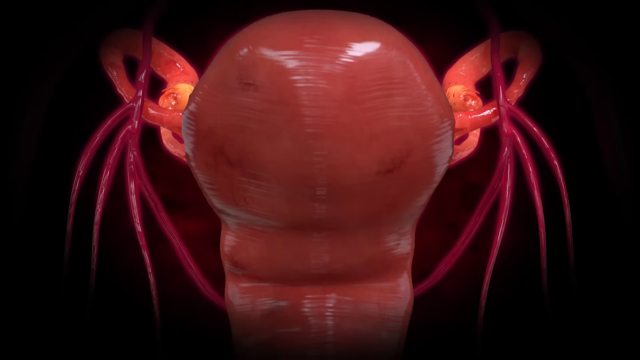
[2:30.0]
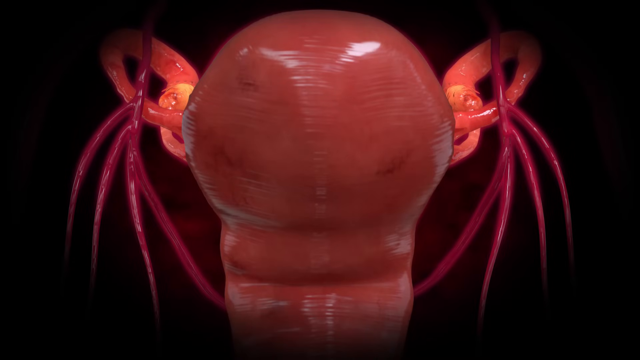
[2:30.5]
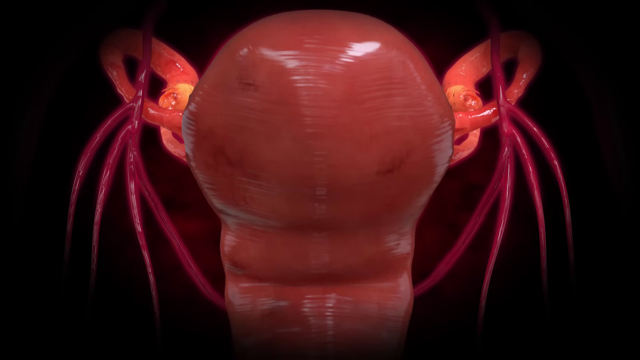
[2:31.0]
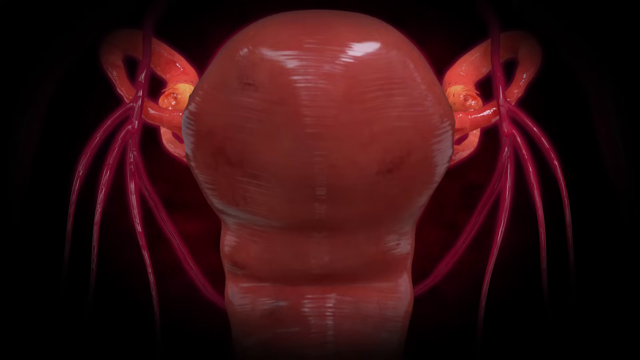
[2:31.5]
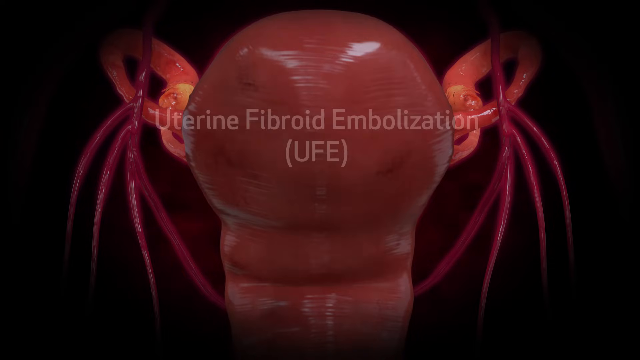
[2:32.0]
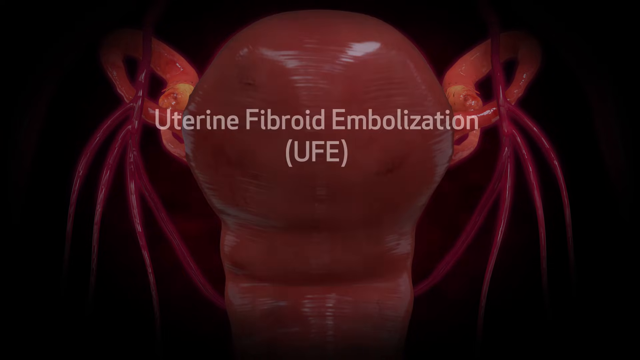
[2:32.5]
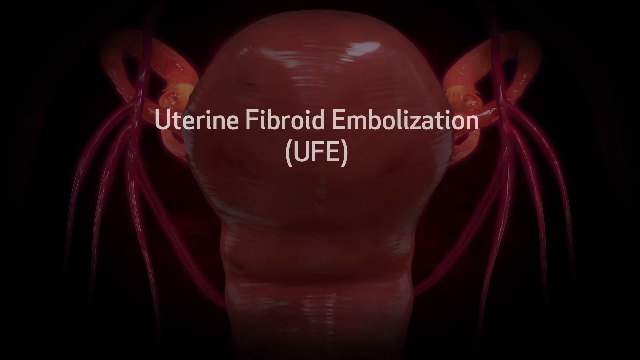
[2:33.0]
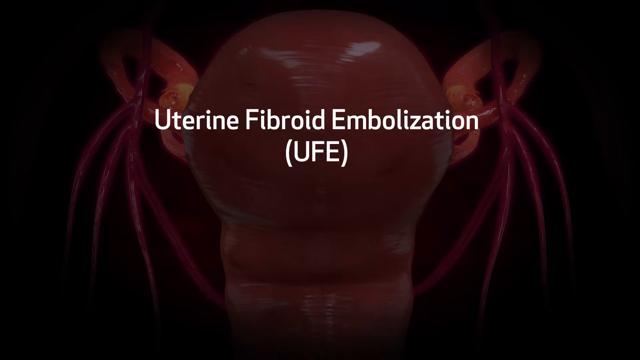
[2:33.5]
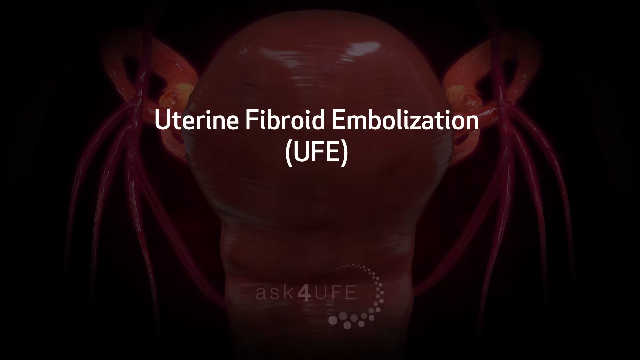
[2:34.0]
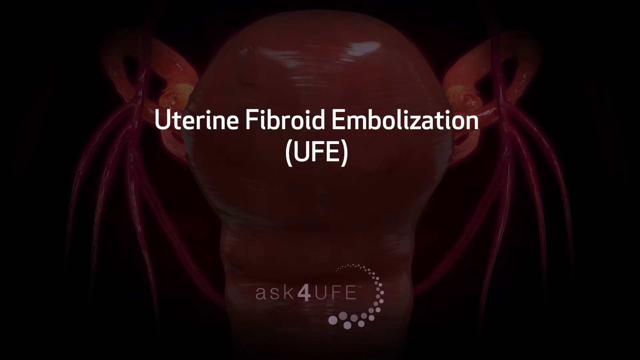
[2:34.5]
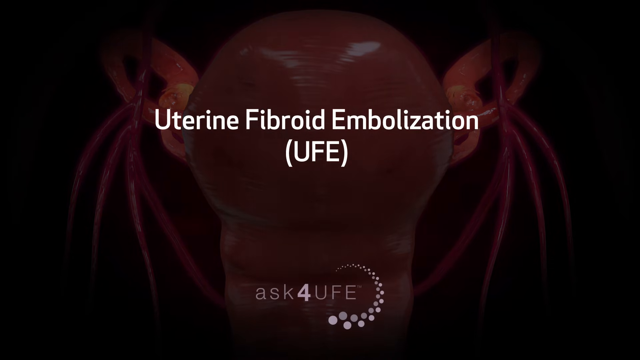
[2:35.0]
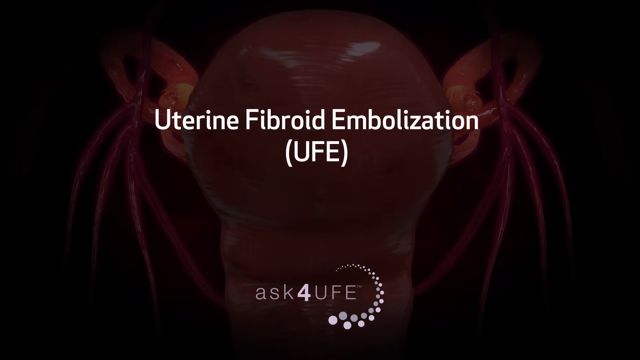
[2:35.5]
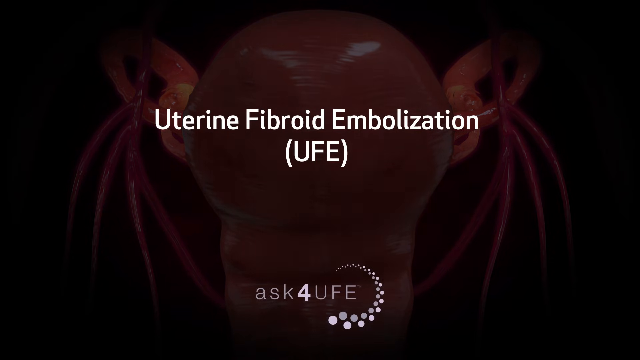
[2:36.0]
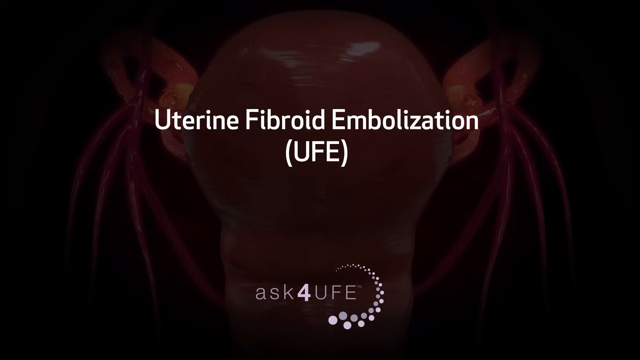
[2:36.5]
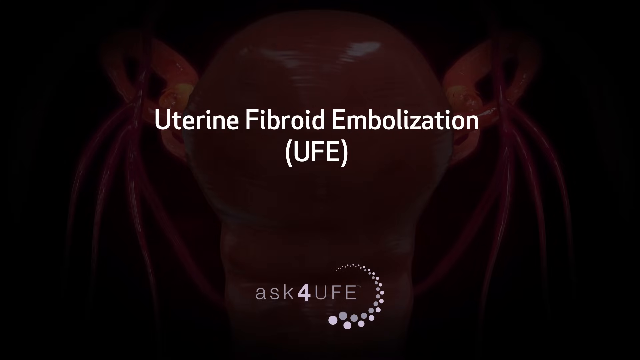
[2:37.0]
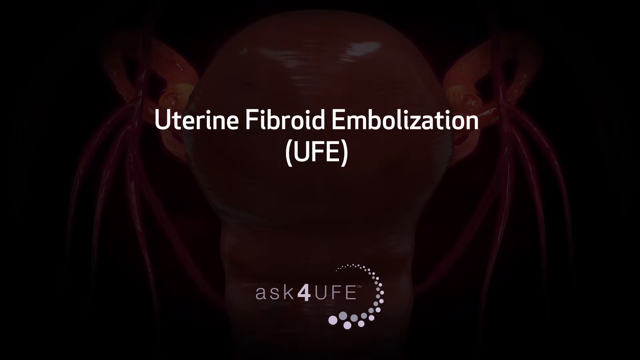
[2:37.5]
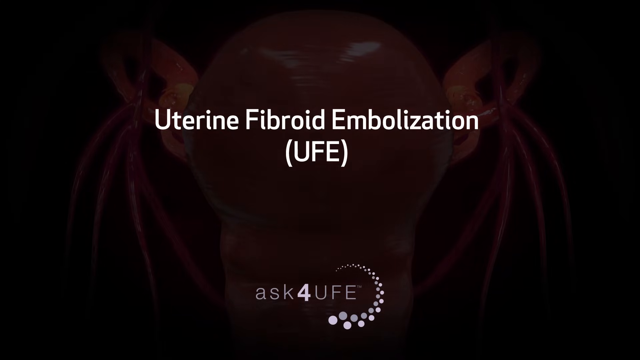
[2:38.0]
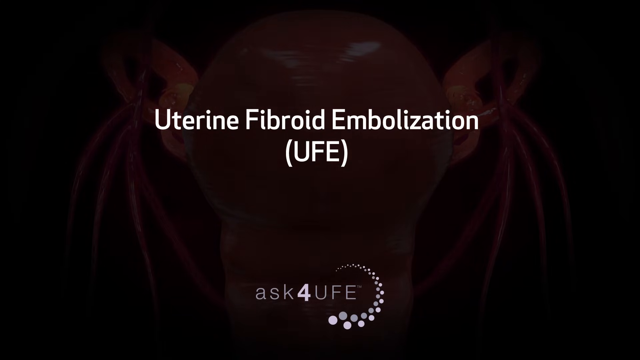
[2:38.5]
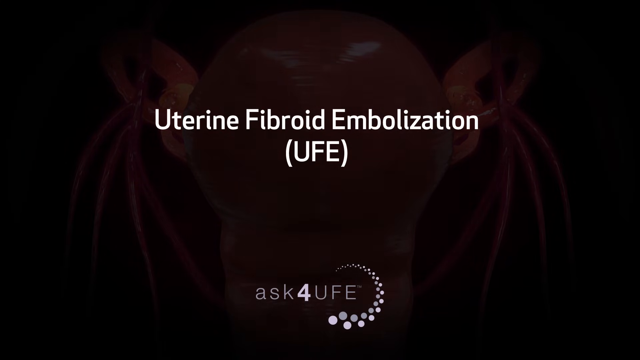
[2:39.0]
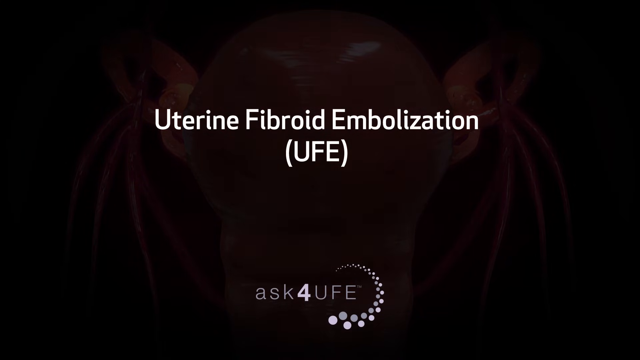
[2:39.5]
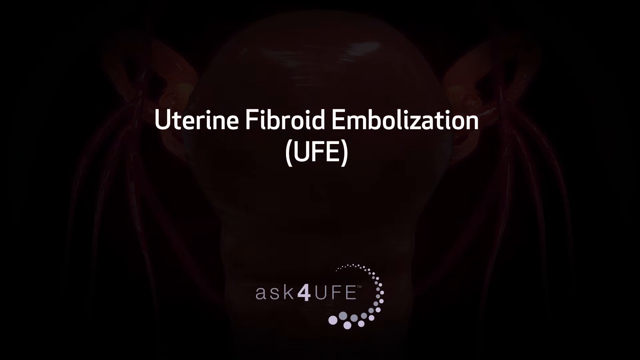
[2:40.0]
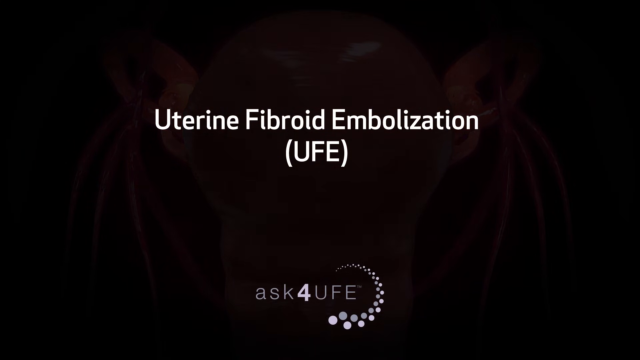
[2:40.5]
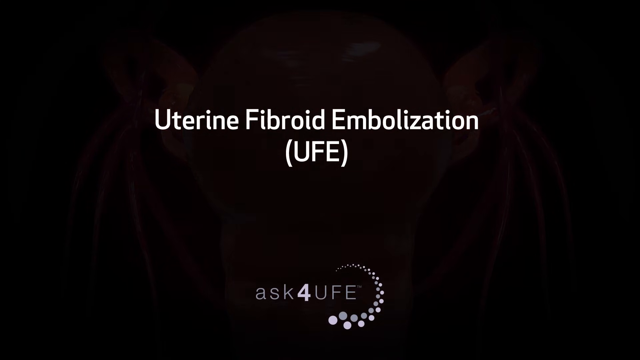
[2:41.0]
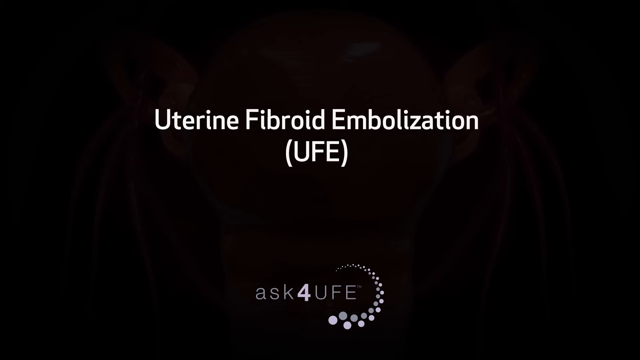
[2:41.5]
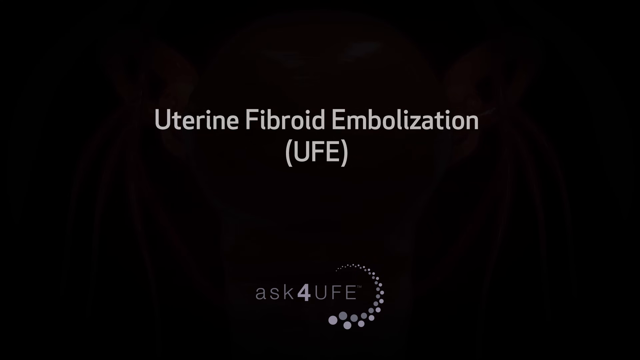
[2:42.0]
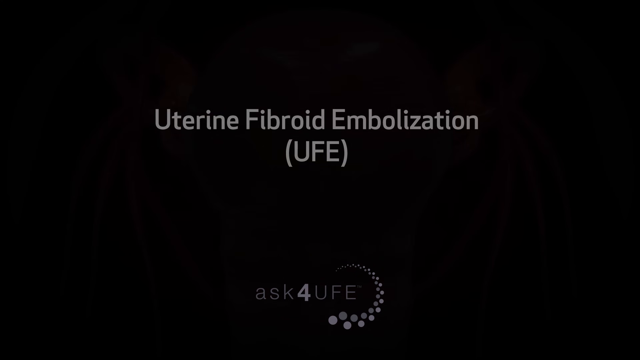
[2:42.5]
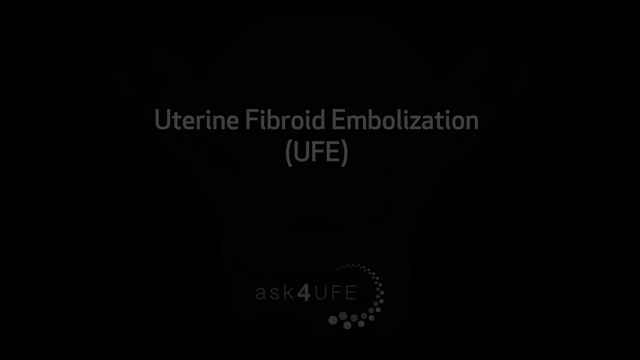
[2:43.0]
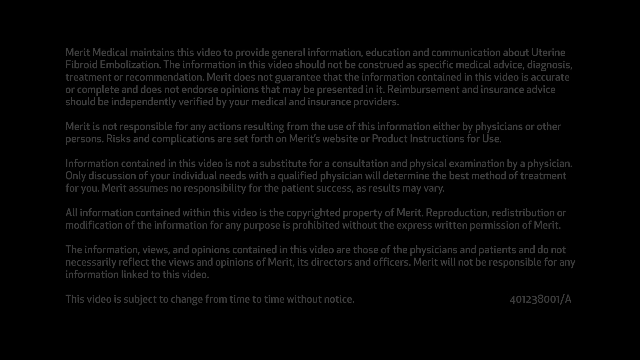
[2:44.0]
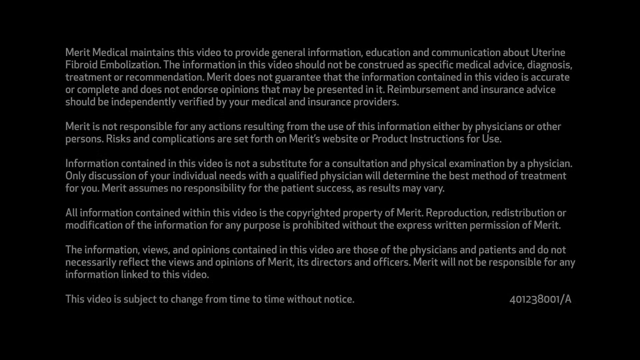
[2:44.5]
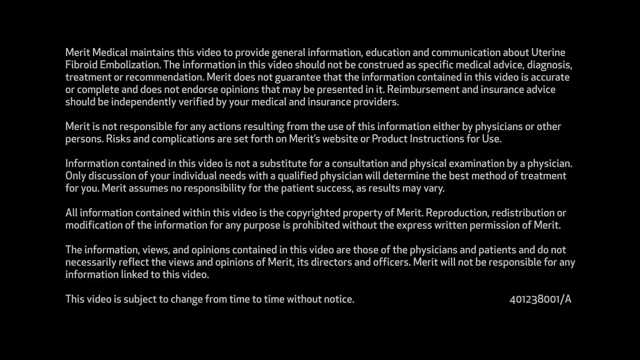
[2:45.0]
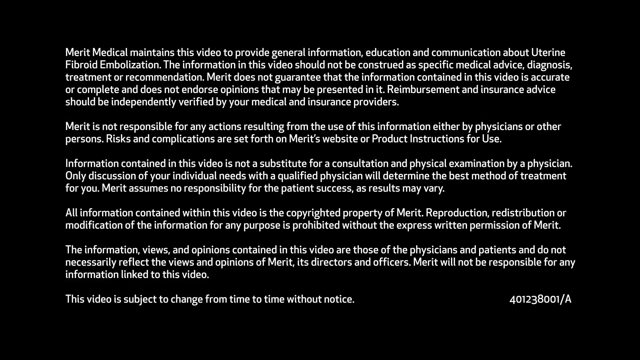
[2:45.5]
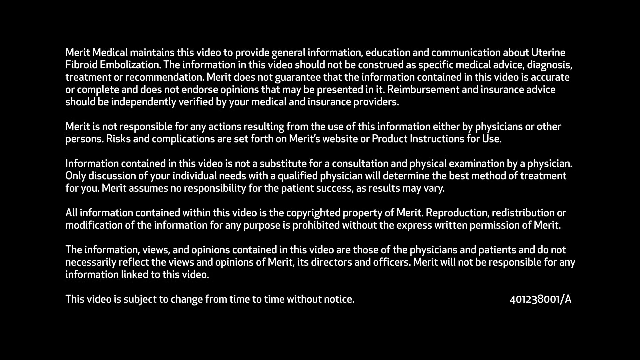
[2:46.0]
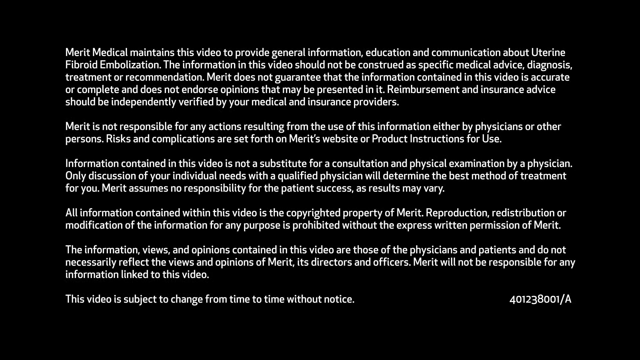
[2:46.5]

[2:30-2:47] The CGI shows a uterus, veins, fallopian tubes and fibroids, illustrating getting rid of uterine fibroids by cutting off their blood supply through uterine fibroid embolization, or UFE. At the end of the video, all the different types of fibroids have been treated with the medication, balls that clog up the veins going to the fibroids so blood cannot get through, and the fibroids start to die. The dead fibroids look like sores, then over time they heal and the uterus returns to its normal smoothness with no fibroids.